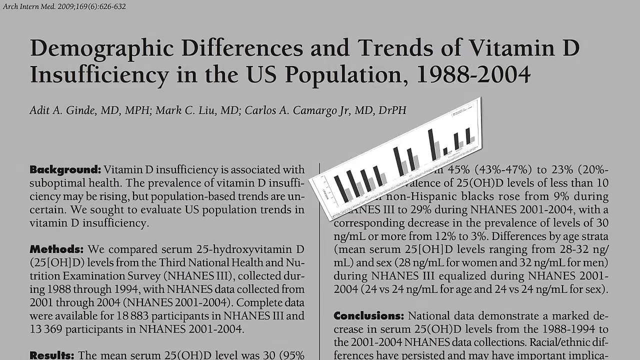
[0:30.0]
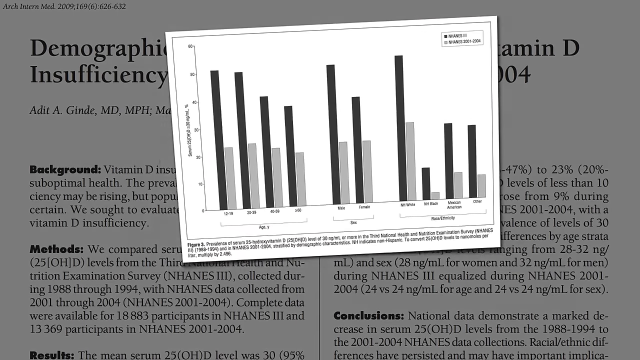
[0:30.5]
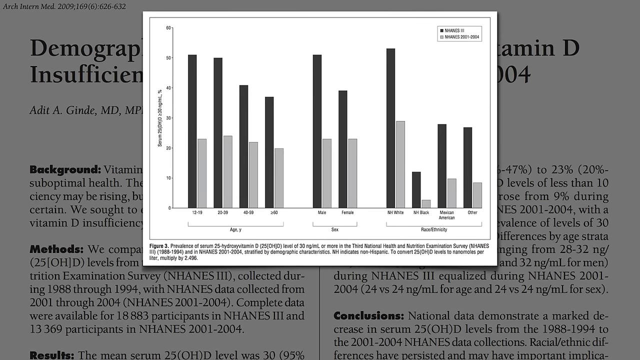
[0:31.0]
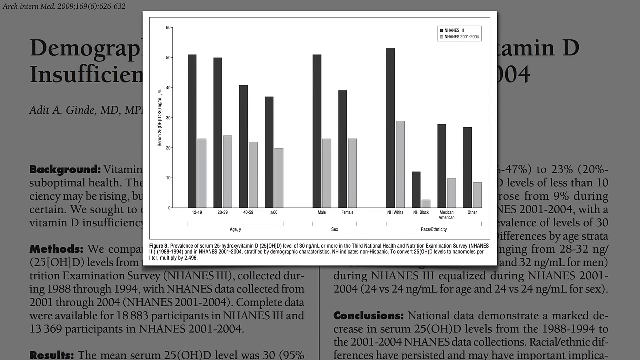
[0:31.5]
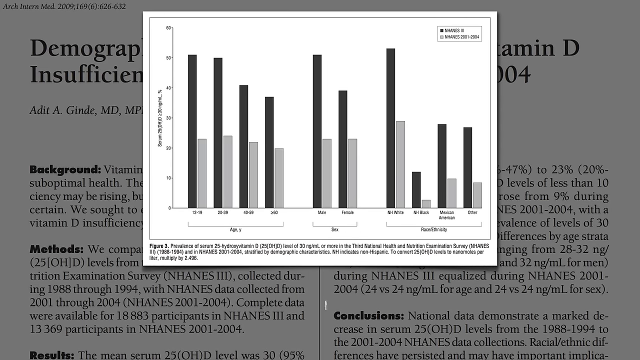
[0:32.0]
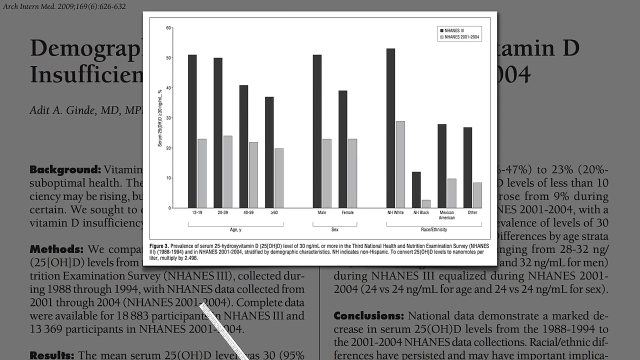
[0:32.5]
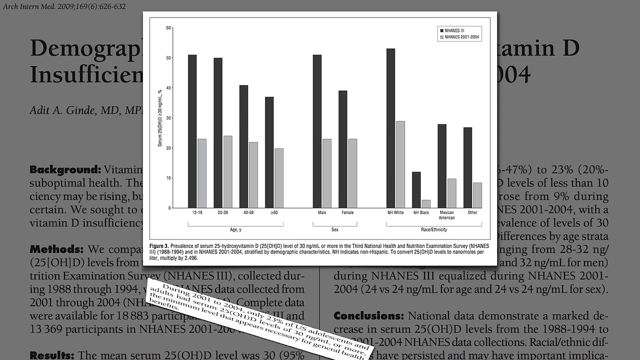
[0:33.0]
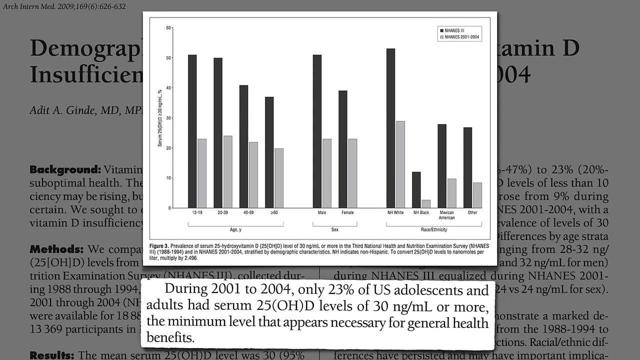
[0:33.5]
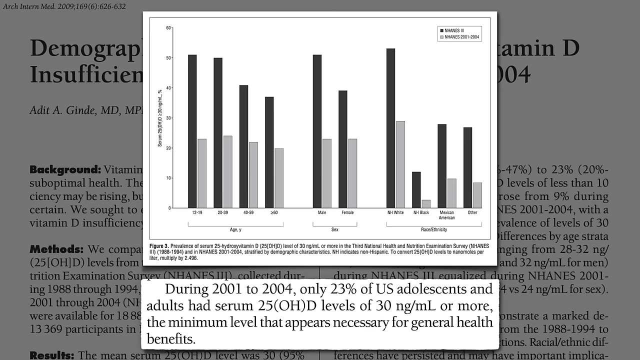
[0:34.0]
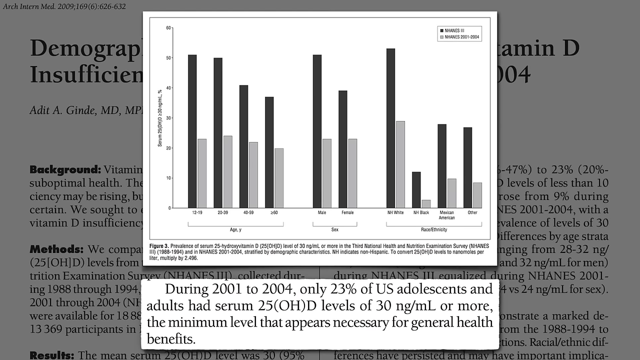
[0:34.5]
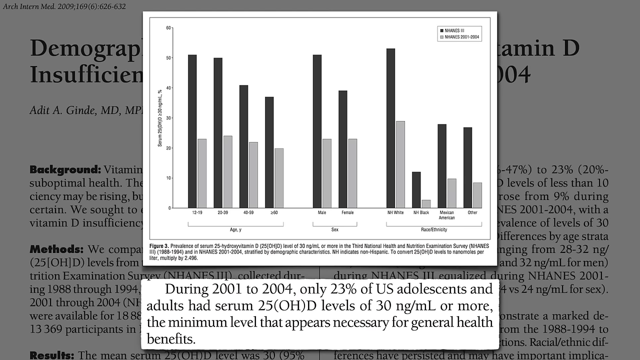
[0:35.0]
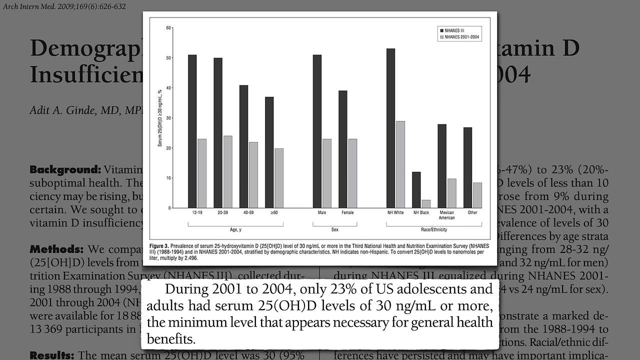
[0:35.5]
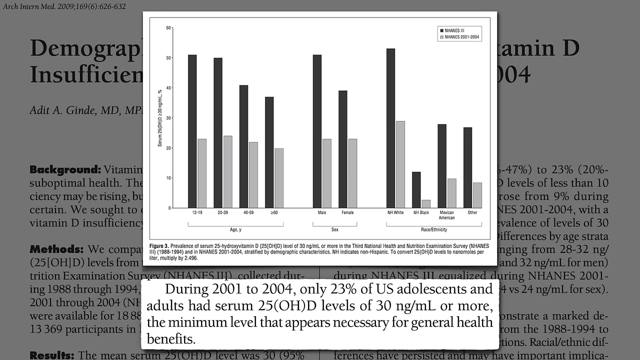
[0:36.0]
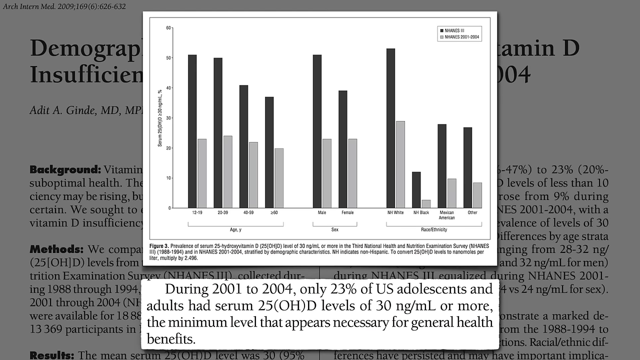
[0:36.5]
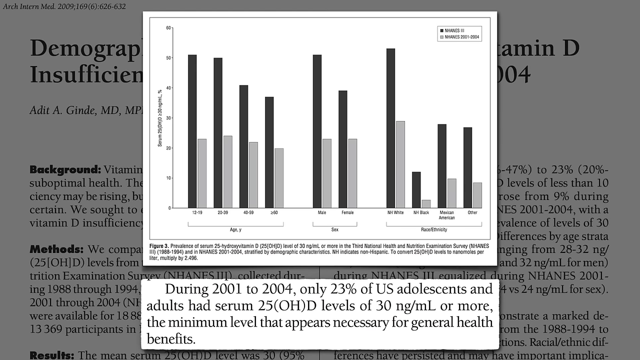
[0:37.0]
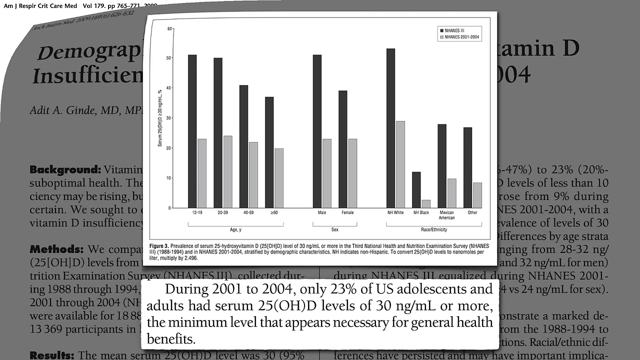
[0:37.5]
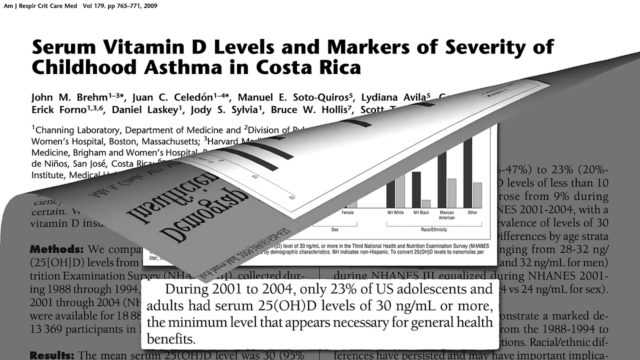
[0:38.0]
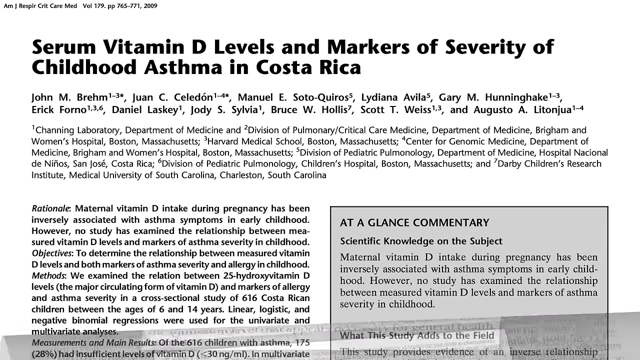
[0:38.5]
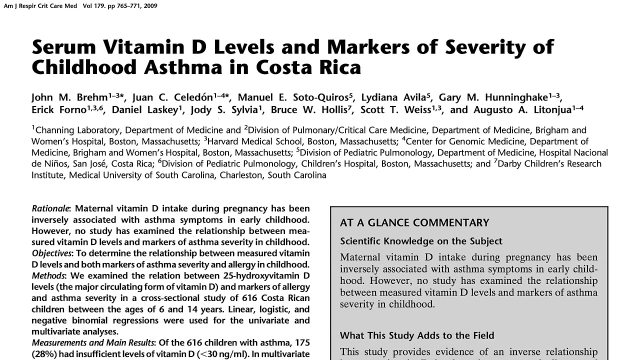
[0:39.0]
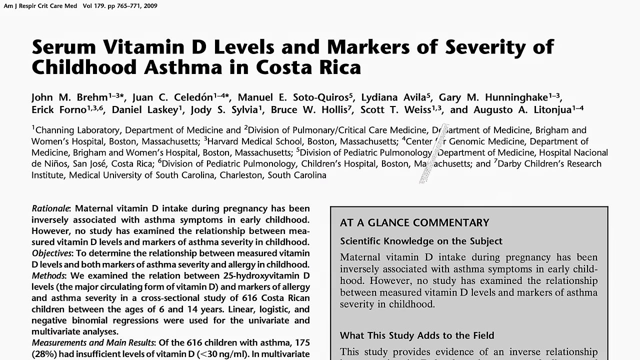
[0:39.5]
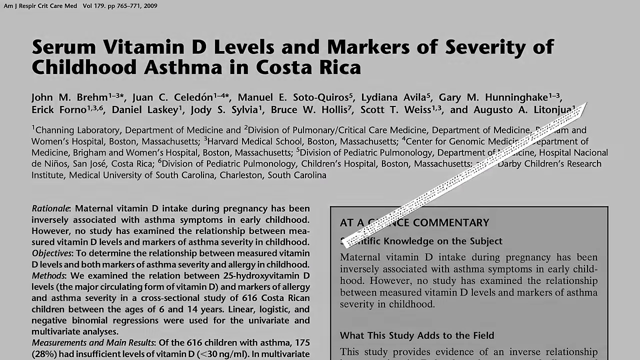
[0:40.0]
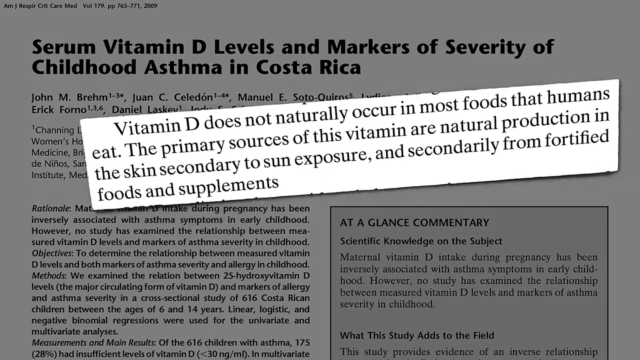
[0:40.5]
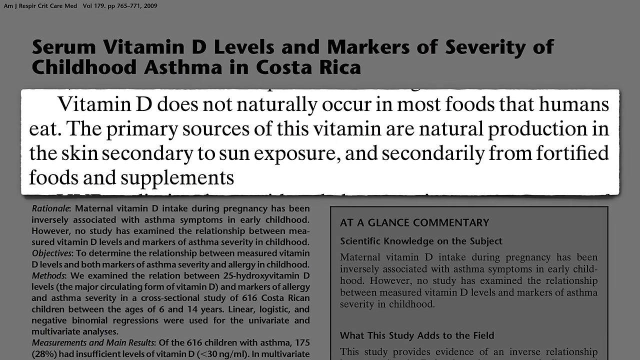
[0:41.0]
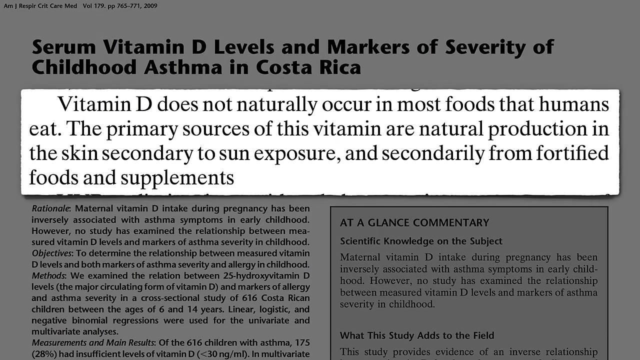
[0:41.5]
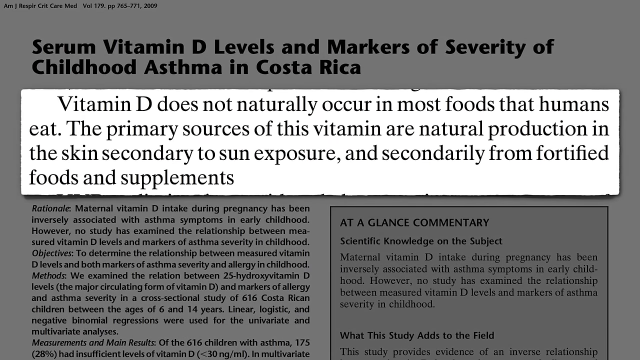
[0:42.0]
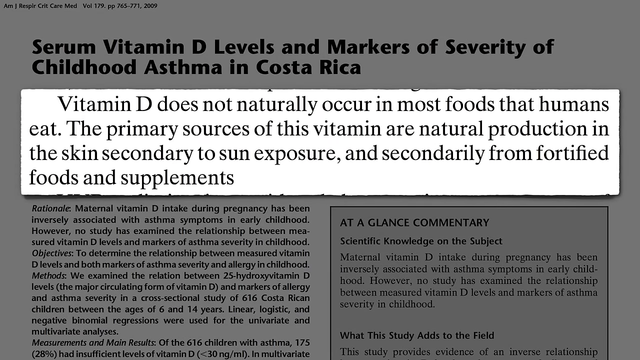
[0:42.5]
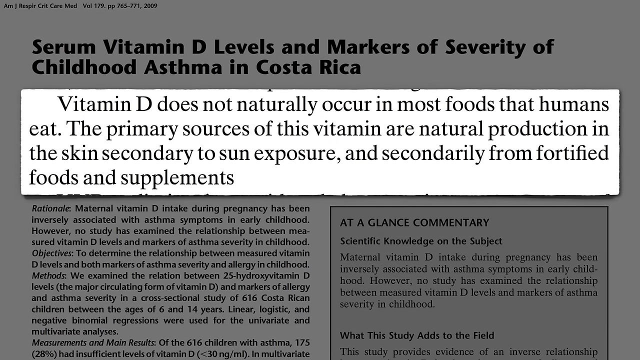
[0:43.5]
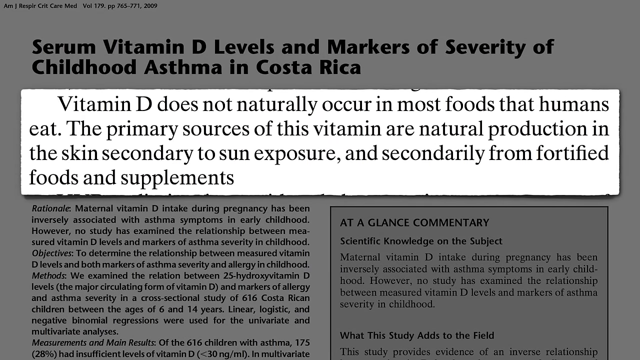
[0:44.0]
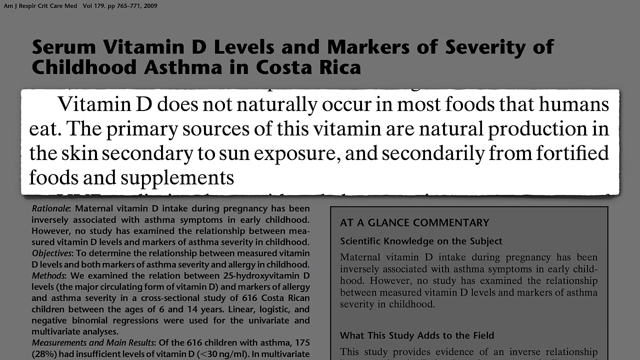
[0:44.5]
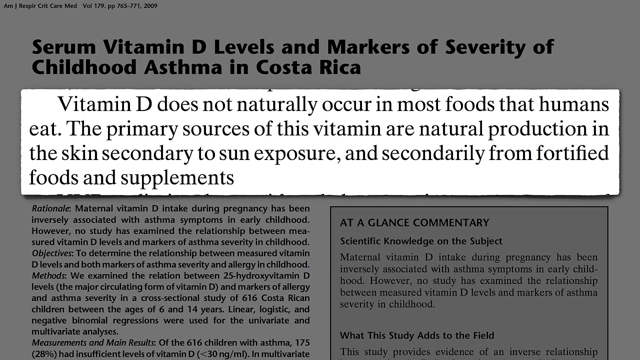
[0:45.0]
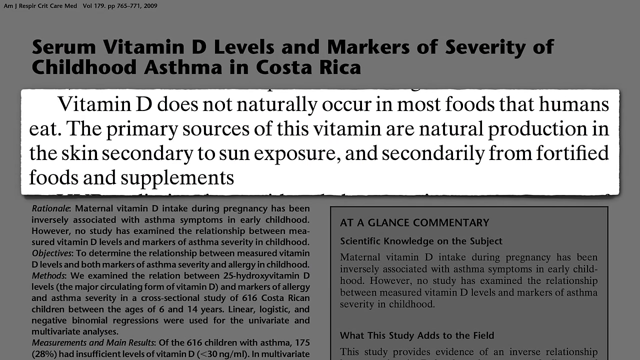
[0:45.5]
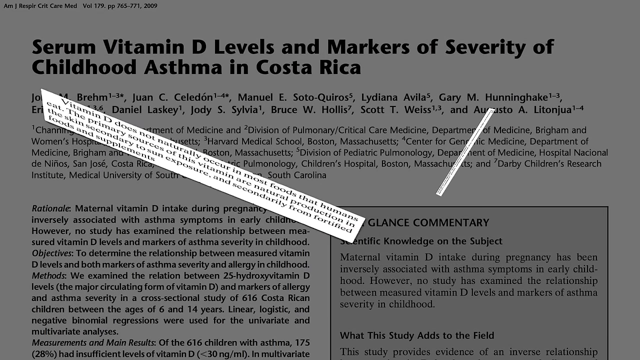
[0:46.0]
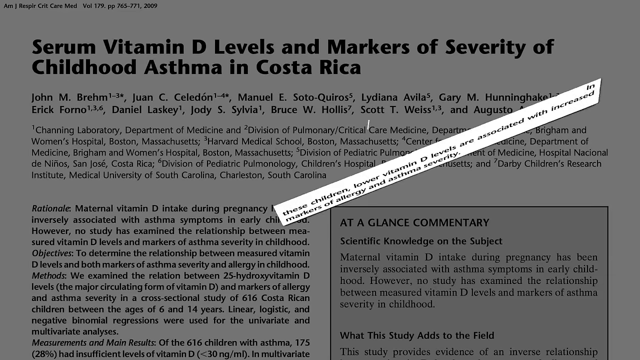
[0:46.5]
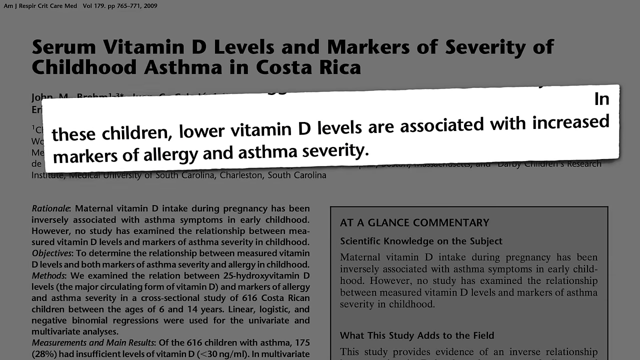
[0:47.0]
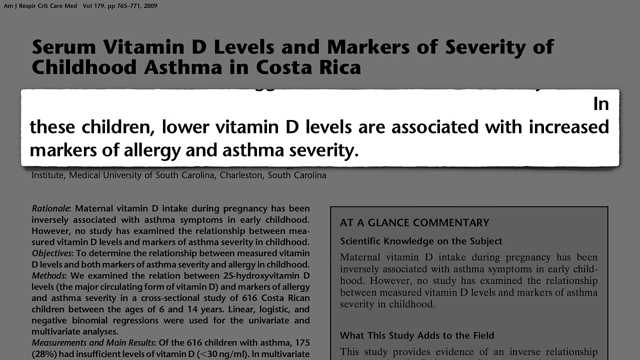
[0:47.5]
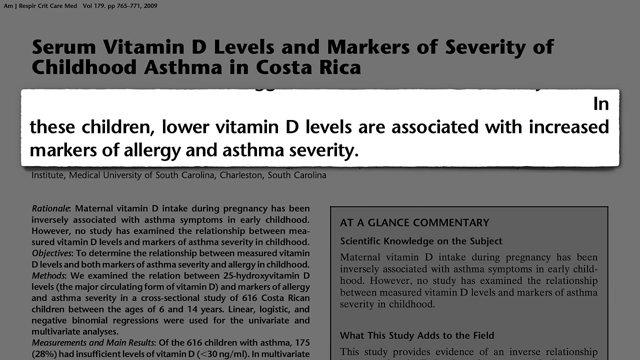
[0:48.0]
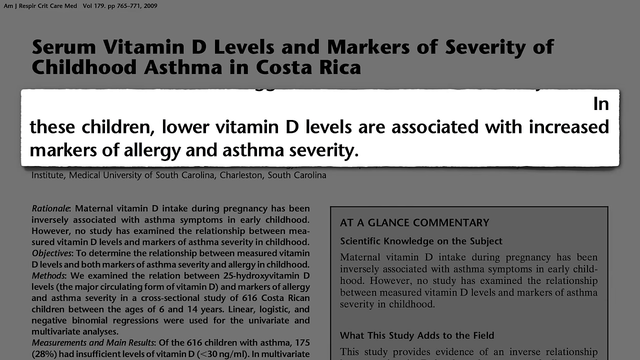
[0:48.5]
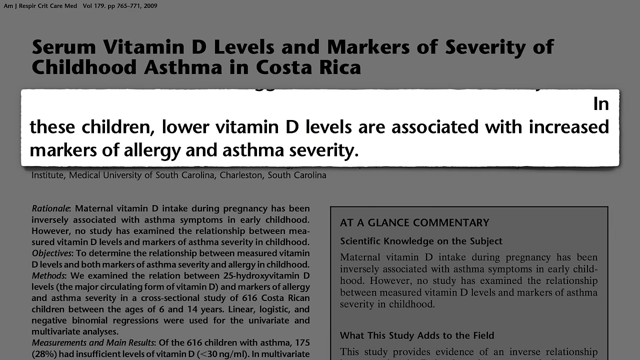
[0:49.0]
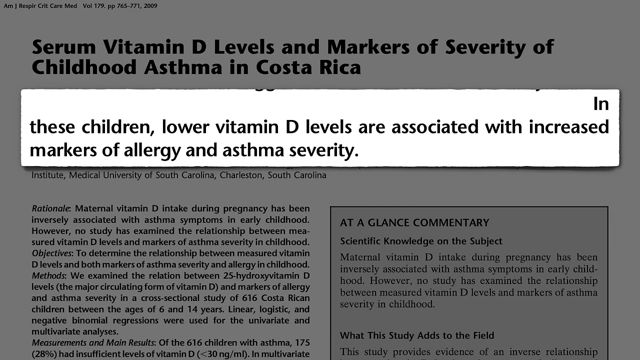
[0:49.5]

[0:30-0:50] A plain white page is shown, and at the top it reads "Demographic Differences and Trends of Vitamin D Insufficiency in the US Population, 1988 to 2004", with an article on the topic below. After a couple of seconds, a bar chart with black bars and light gray bars emerges in the middle of the screen; its font is very small and difficult to read. A couple of seconds later, an excerpt appears at the bottom of the screen in a long white rectangle: "During 2001 to 2004, only 23% of US adolescents and adults had serum 25D levels of 30 NG per ml or more, the minimum level that appears necessary for general health benefits." Another article follows, with a bold heading at the top reading "serum vitamin D levels and markers of severity of childhood asthma in Costa Rica" and the article below it. An excerpt appears in the middle of the screen: "vitamin D does not naturally occur in most foods that humans eat. The primary sources of this vitamin are natural production in the skin, secondary to sun exposure, and secondarily from fortified foods and supplements." A new excerpt then appears in the middle of the screen: "in these children lower vitamin D levels are associated with increased markers of allergy and asthma severity."